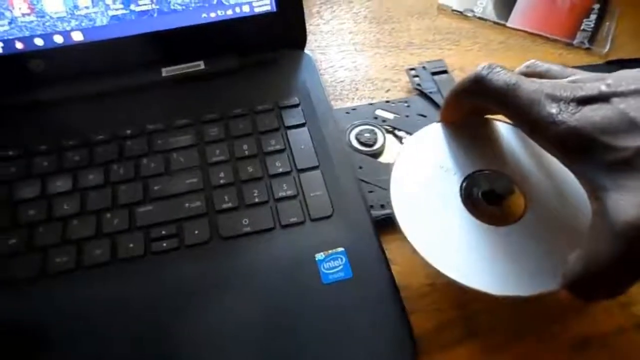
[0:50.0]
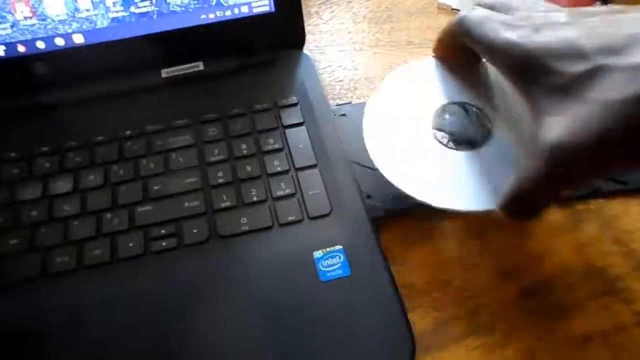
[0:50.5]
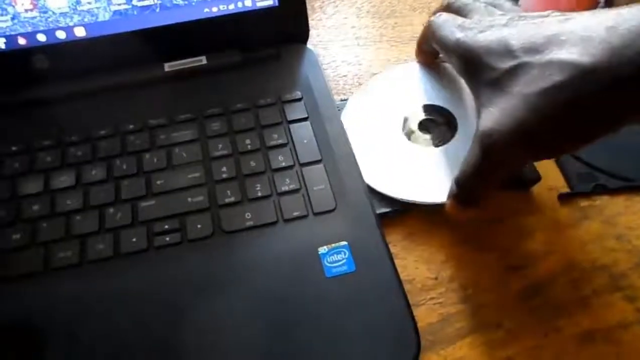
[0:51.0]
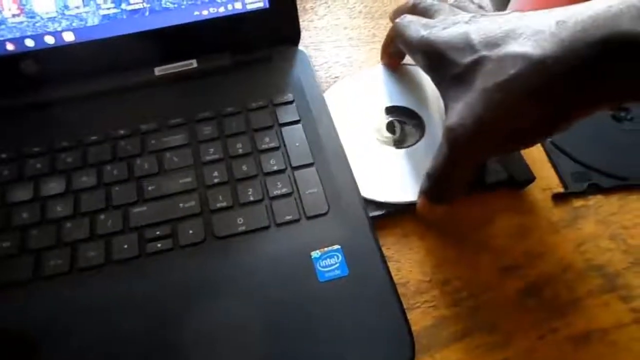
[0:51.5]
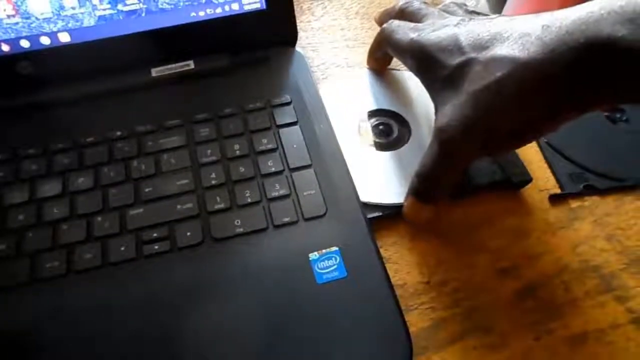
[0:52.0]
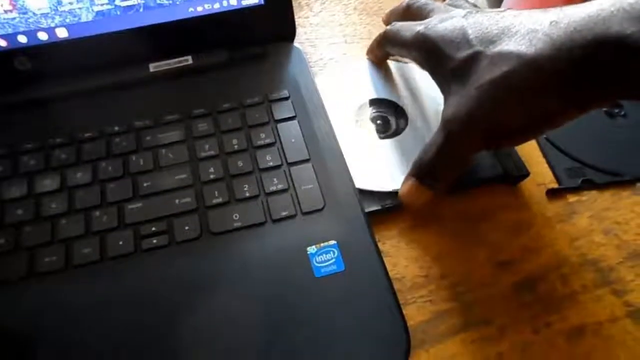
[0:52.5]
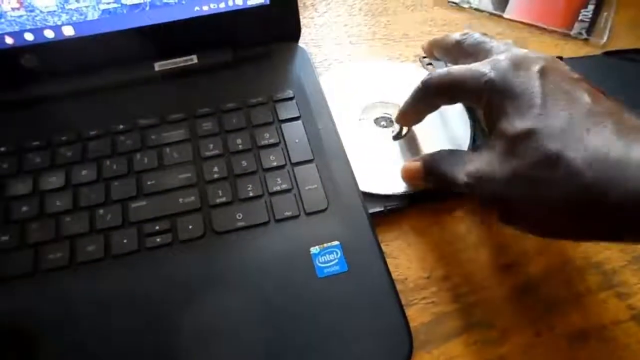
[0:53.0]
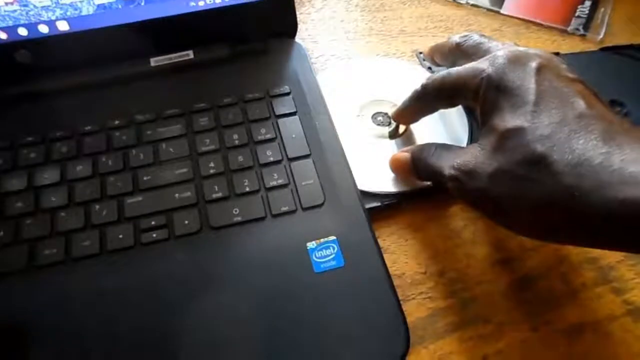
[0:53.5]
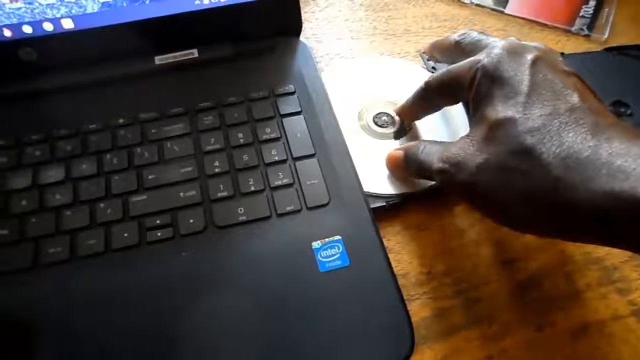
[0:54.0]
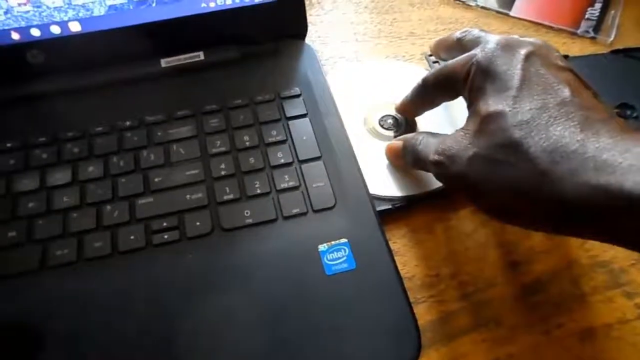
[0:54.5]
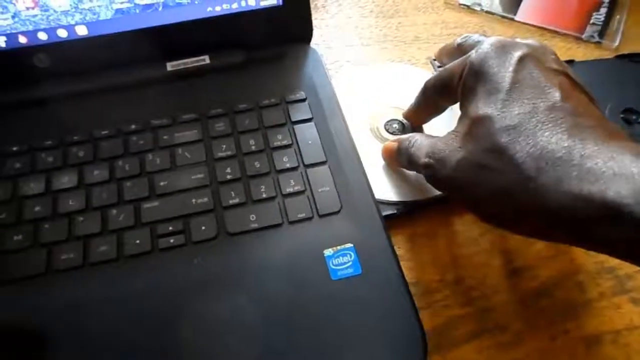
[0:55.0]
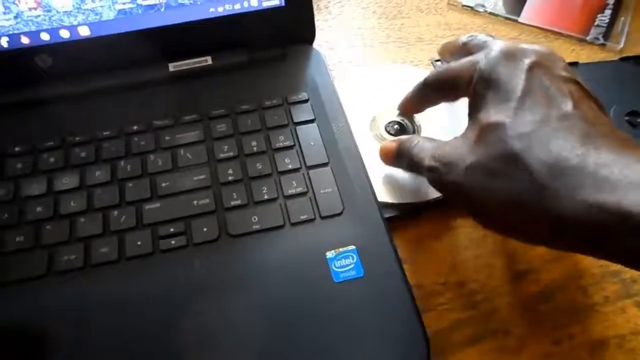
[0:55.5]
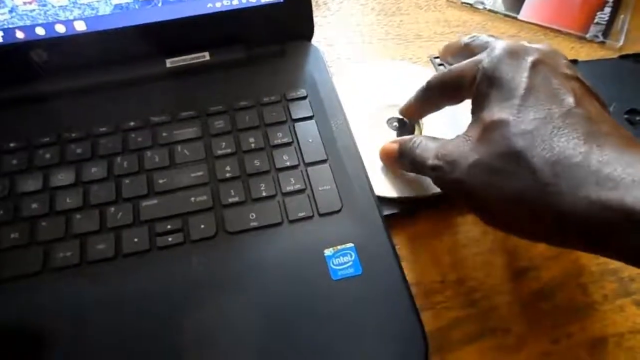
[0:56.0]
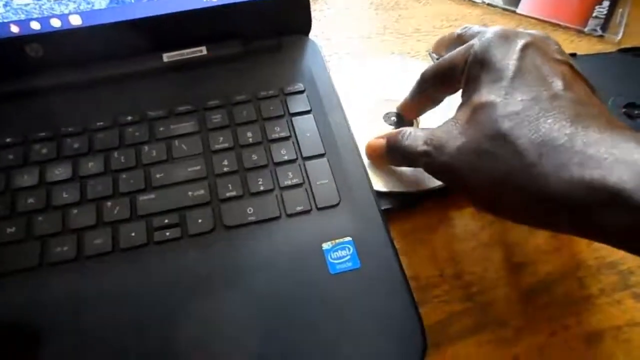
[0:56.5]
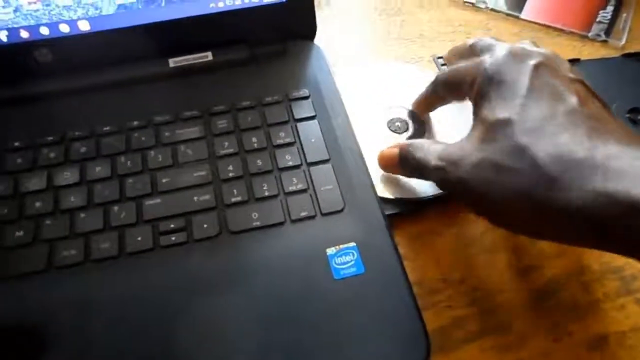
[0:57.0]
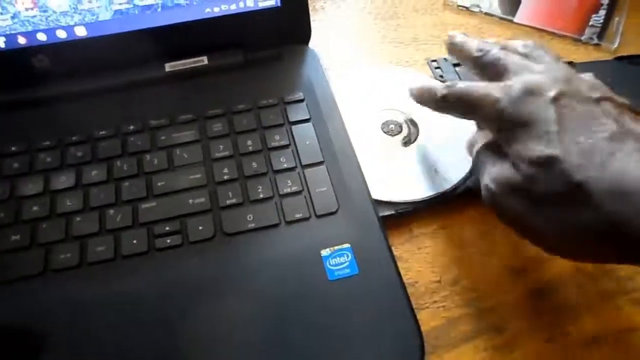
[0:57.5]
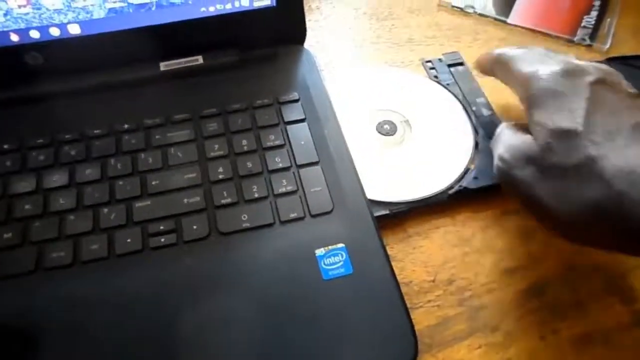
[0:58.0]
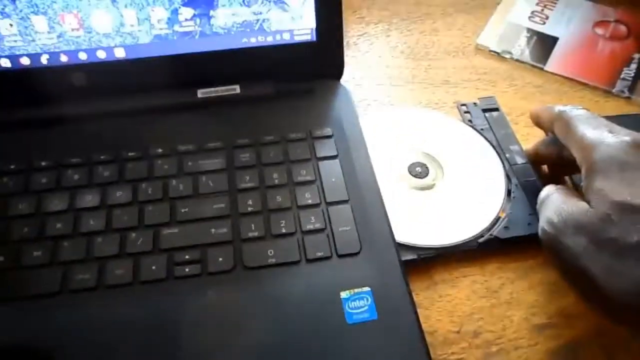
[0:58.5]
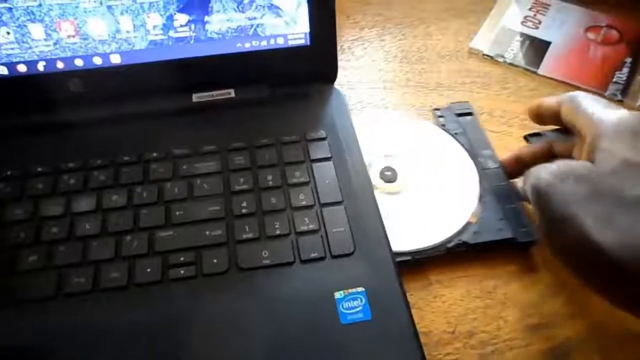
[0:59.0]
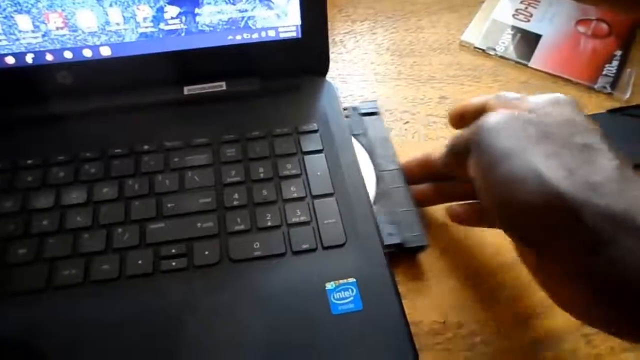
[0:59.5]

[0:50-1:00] The black laptop is an HP, with an HP logo on the bottom, and to the right there is a blue sticker that says "Intel Inside". A hand puts a white CD into the CD tray, presses it firmly so it clicks into the tray, and then gently pushes the tray into the laptop. Part of the CD container is in the top left; it is transparent with a red and black picture. Another piece of the container, which is black, is on the right side.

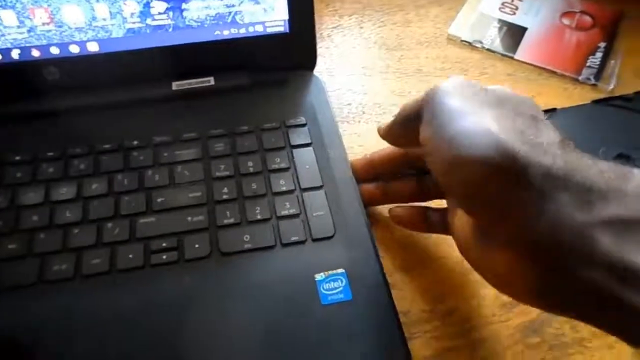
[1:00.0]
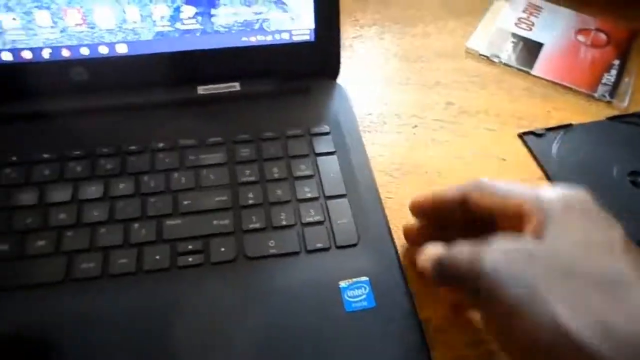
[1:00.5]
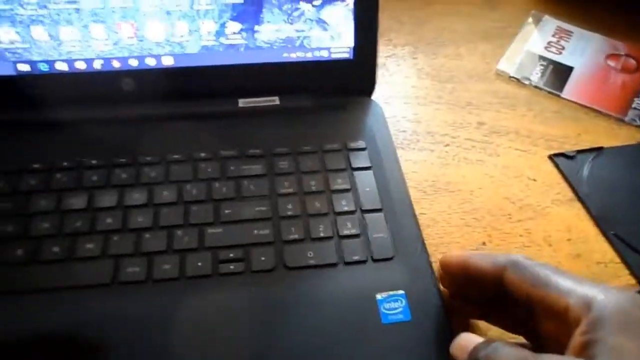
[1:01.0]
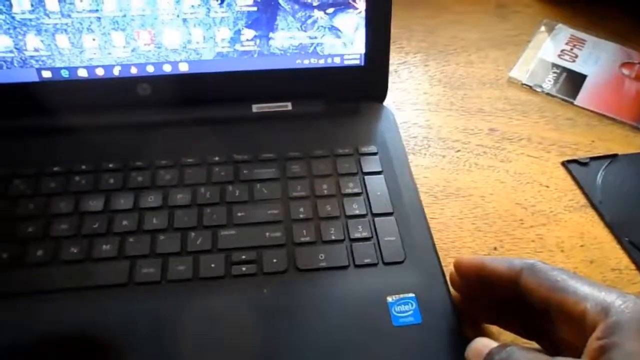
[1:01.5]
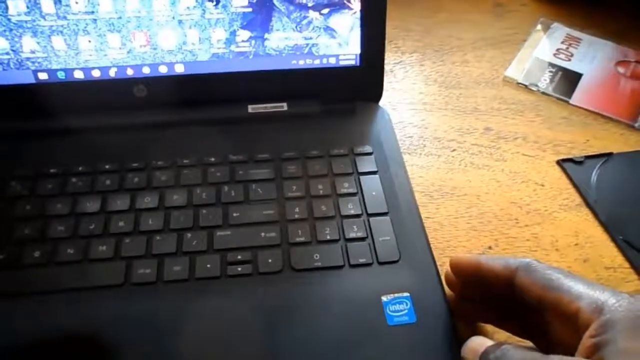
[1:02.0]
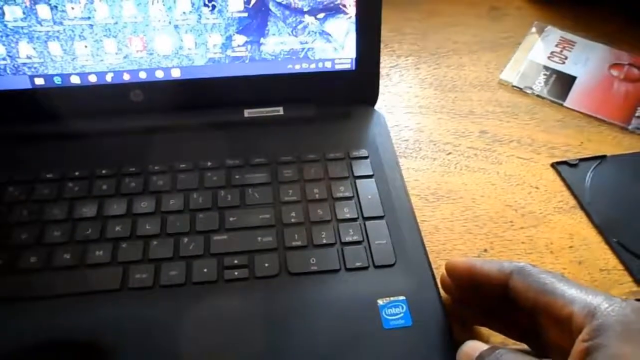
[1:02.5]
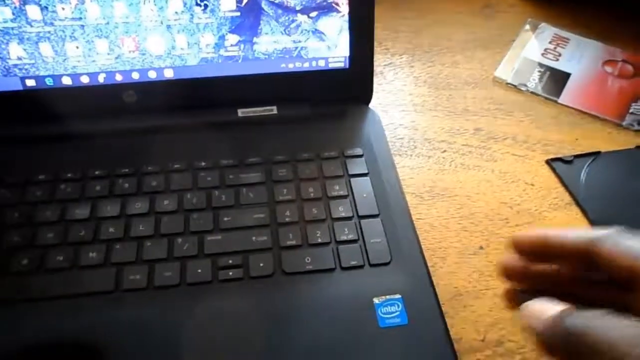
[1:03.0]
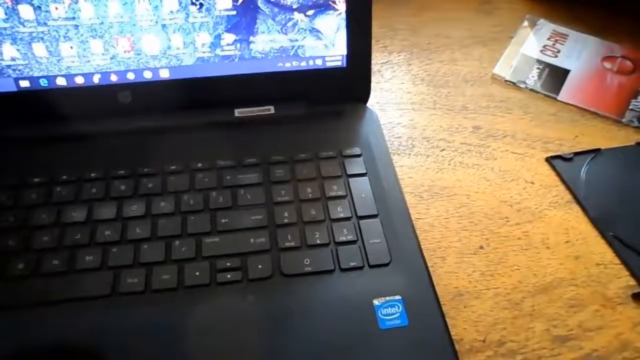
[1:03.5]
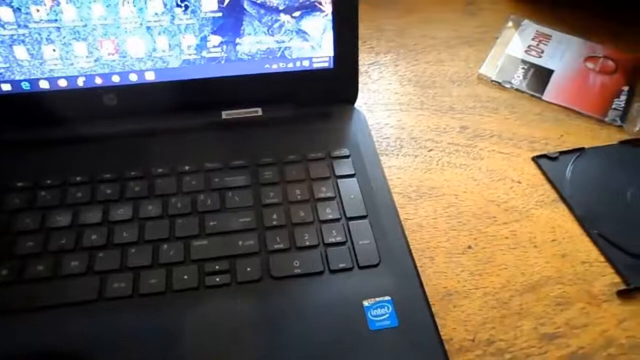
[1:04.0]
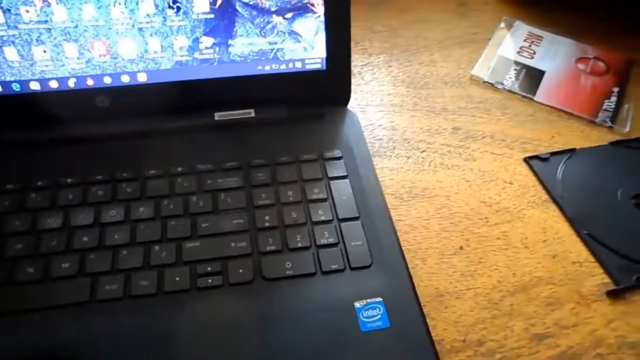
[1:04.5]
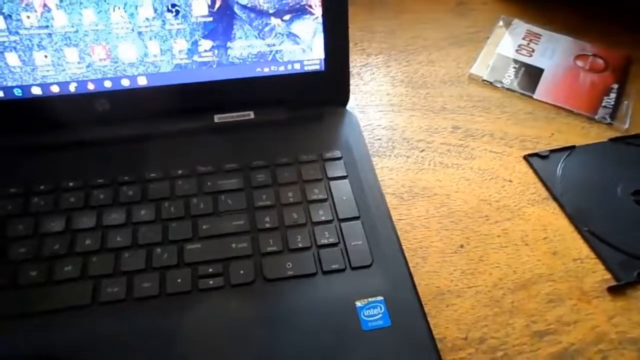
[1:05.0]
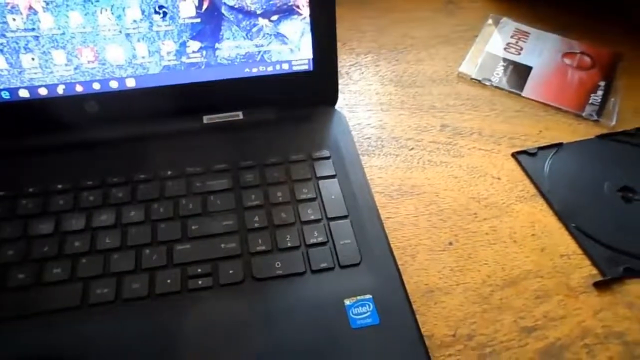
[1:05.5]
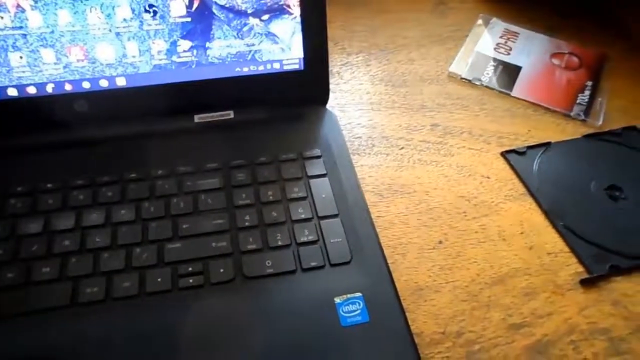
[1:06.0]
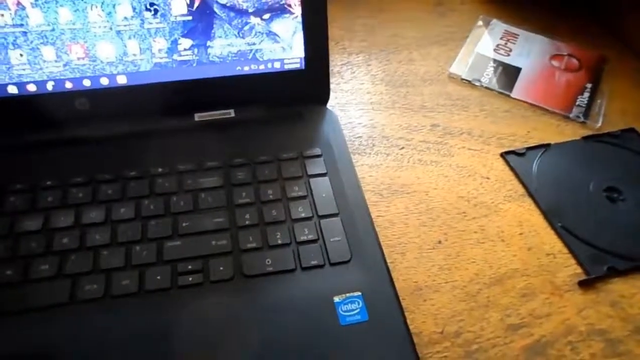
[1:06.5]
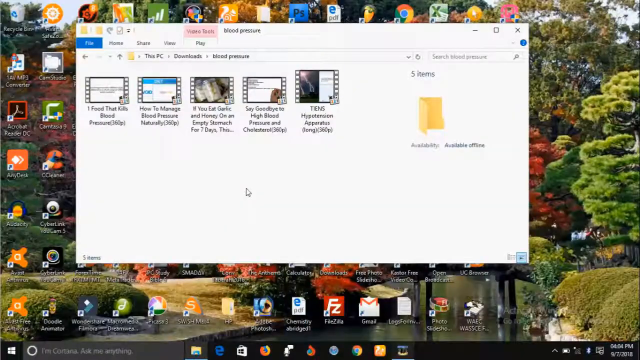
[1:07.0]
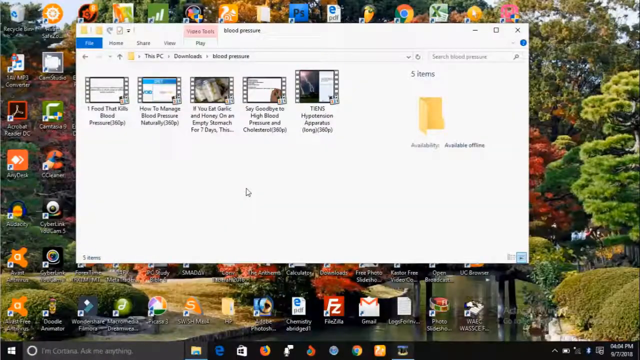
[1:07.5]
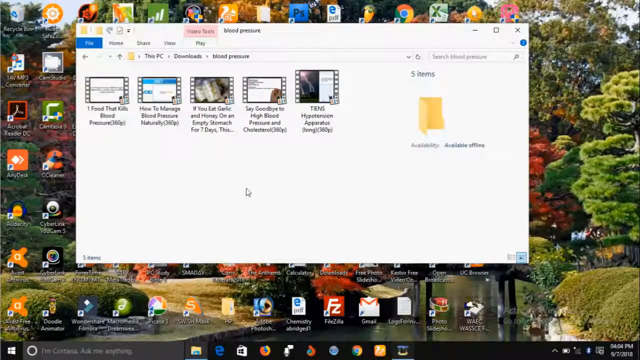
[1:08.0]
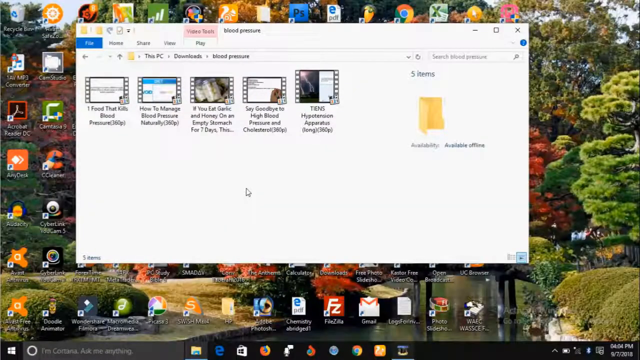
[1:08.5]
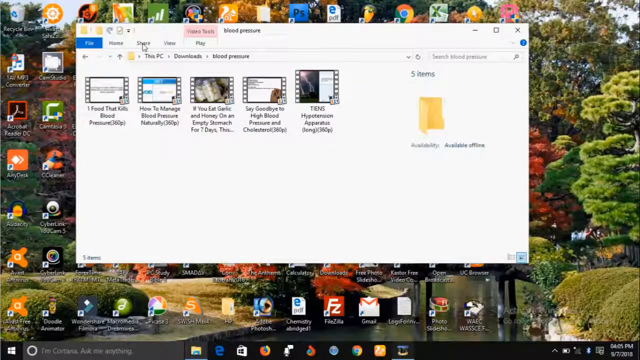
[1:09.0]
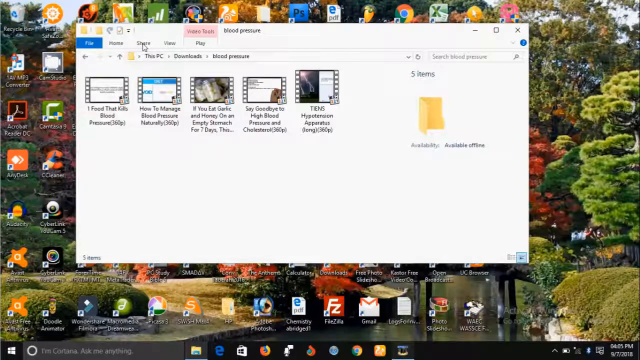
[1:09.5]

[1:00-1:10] The right hand gently pushes the CD tray into the laptop, and the laptop loads the CD. The CD container has writing on it reading "Sony CD-RN", with gradient colours of white and red, and the Sony logo is written in white on a black background. The container has two pieces: a transparent part through which the CD can be seen, and a black piece underneath that the CD is clipped onto.